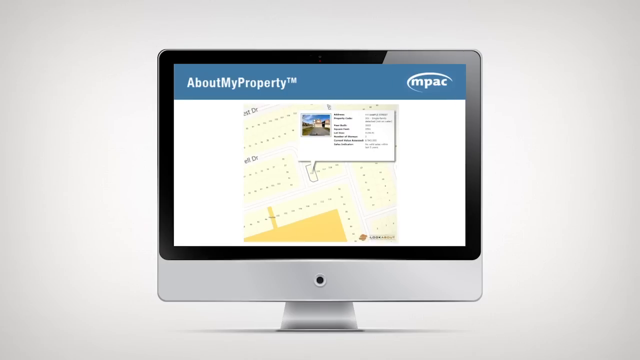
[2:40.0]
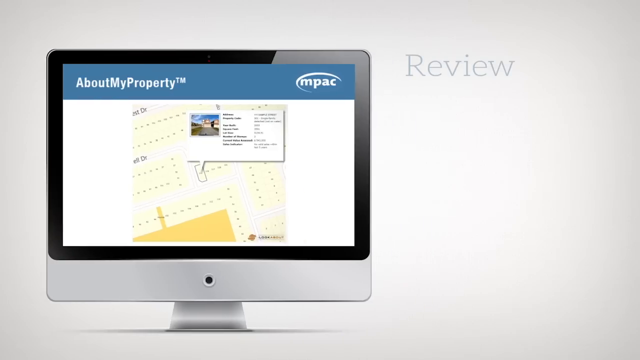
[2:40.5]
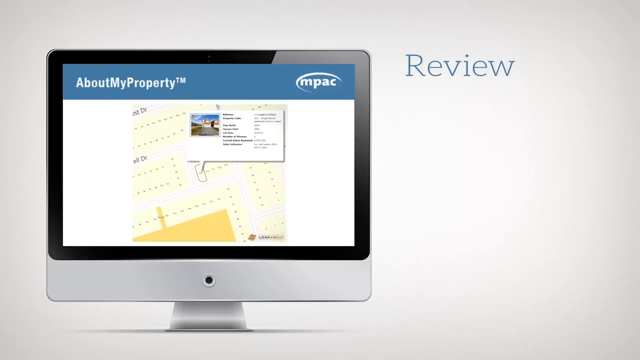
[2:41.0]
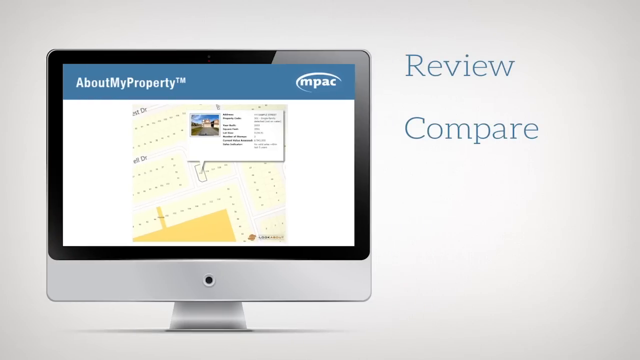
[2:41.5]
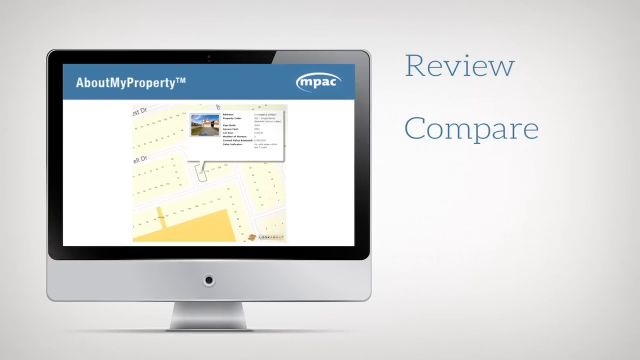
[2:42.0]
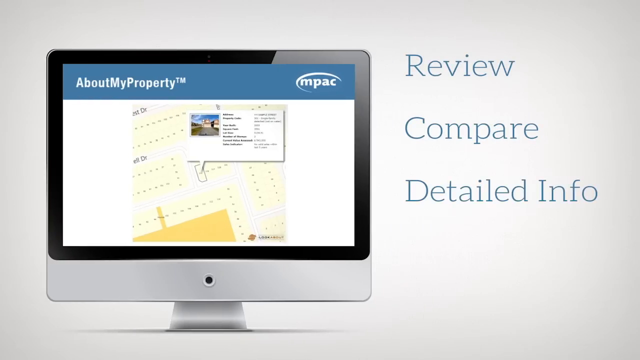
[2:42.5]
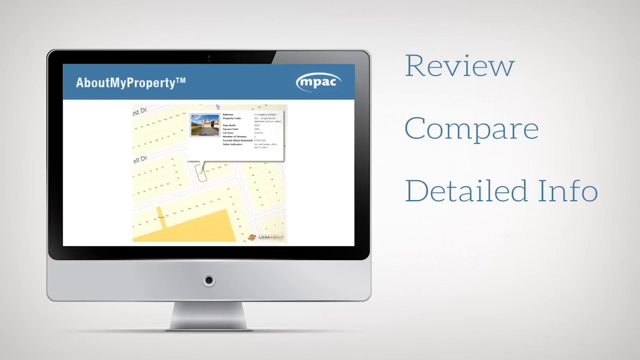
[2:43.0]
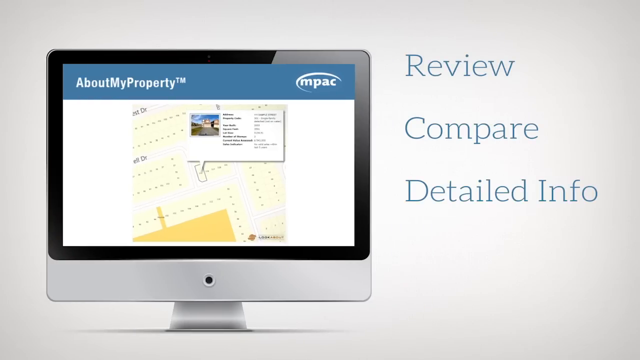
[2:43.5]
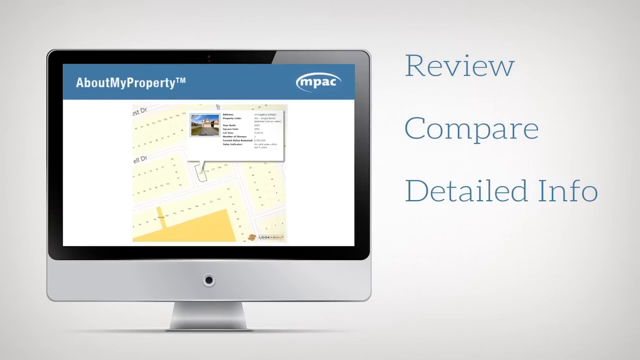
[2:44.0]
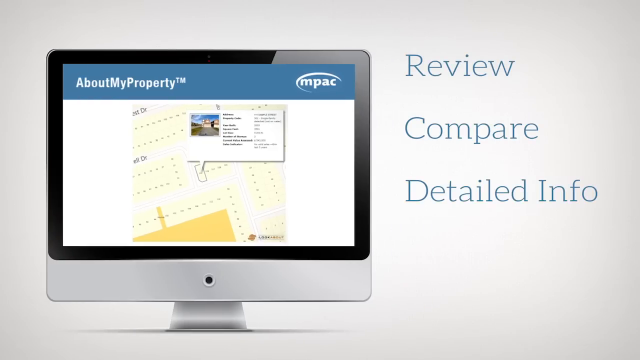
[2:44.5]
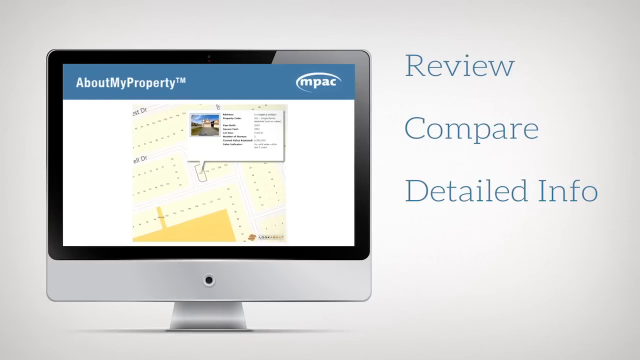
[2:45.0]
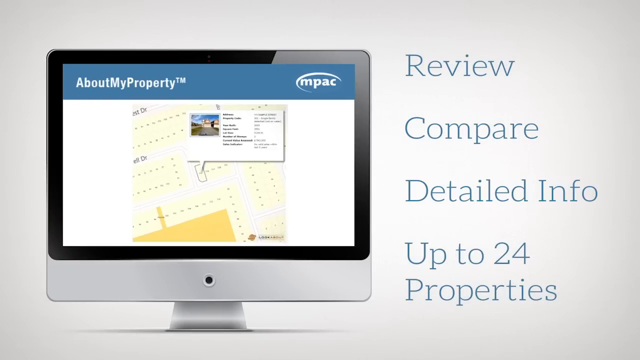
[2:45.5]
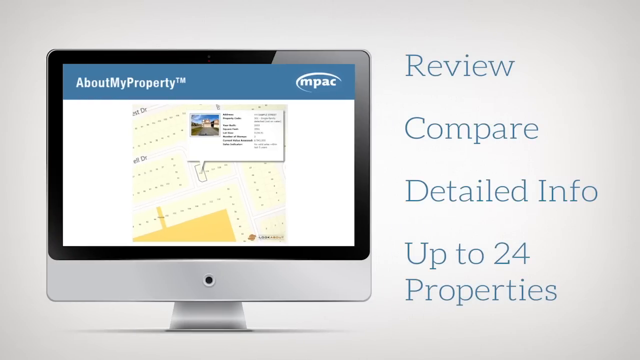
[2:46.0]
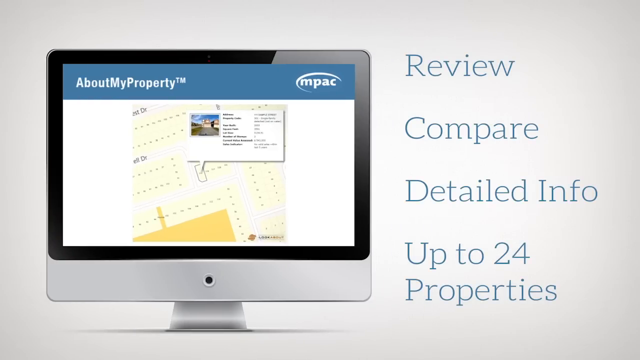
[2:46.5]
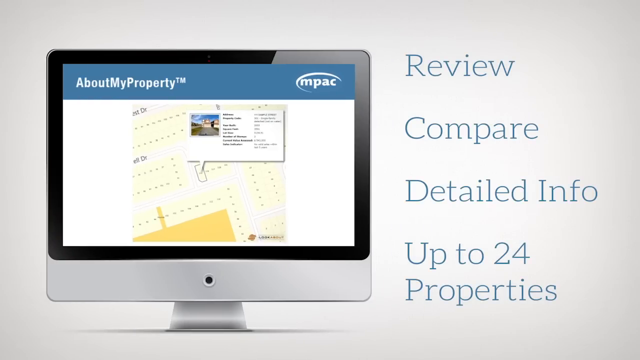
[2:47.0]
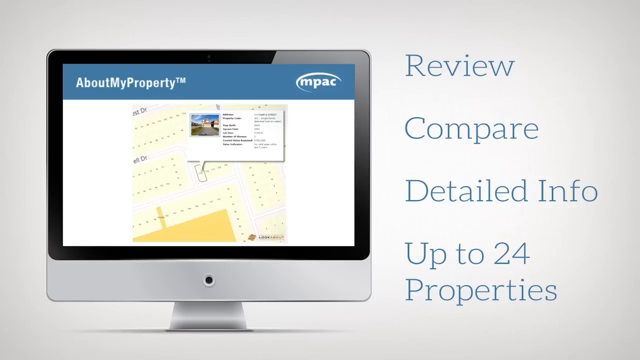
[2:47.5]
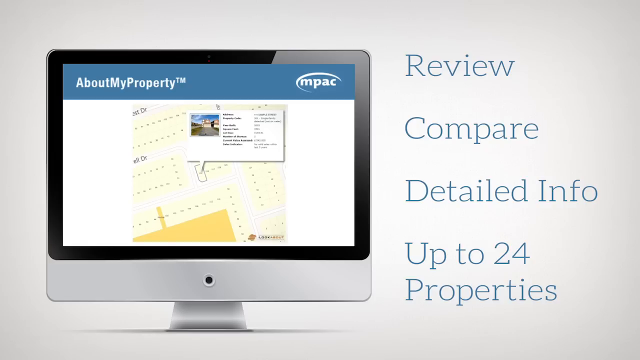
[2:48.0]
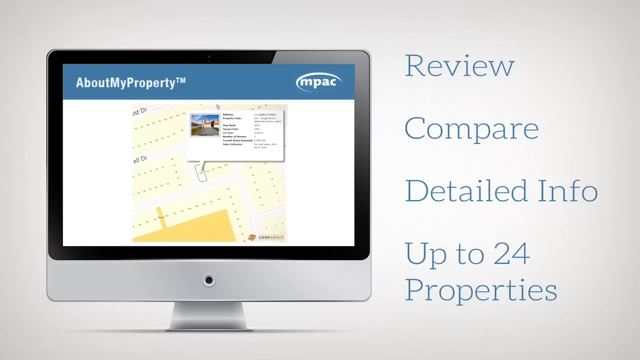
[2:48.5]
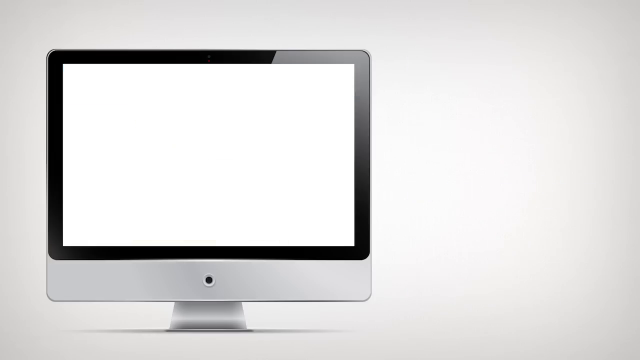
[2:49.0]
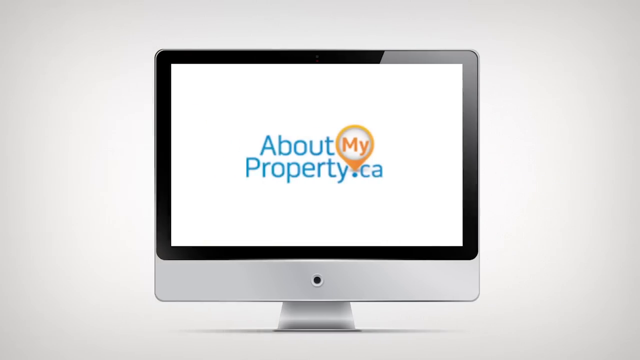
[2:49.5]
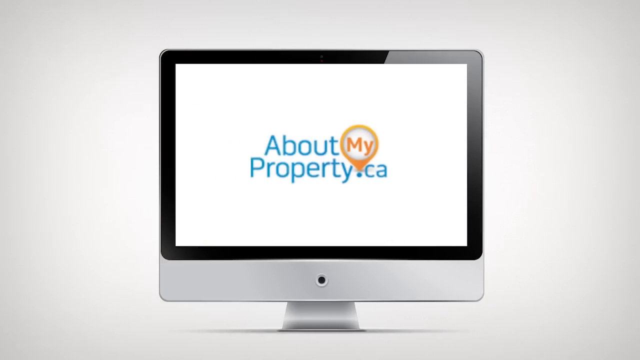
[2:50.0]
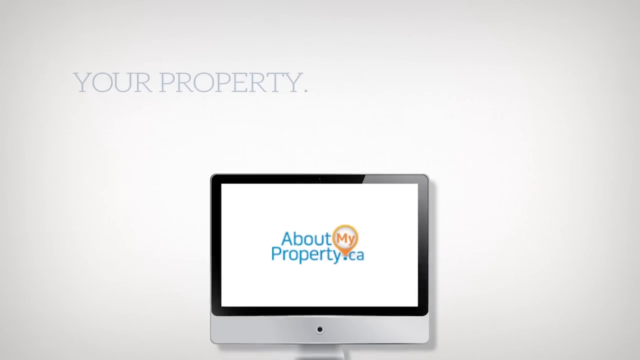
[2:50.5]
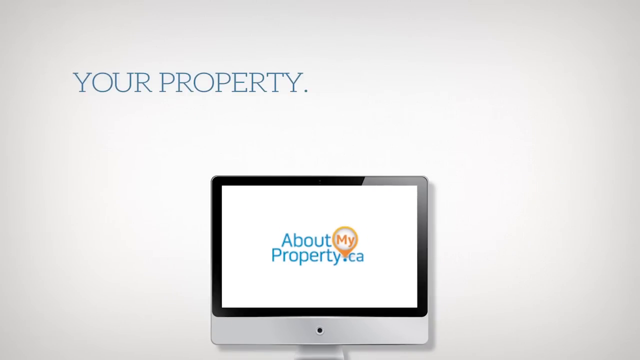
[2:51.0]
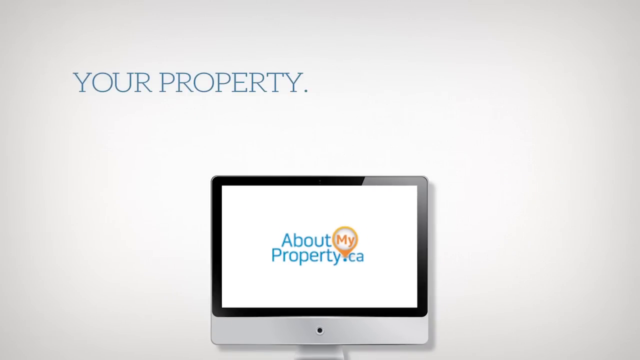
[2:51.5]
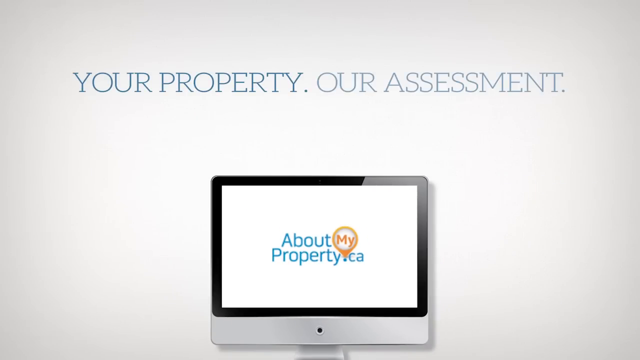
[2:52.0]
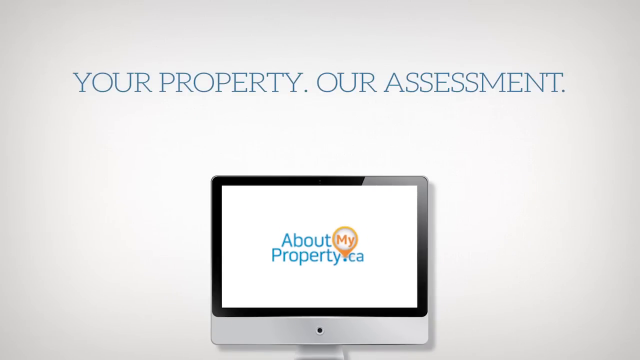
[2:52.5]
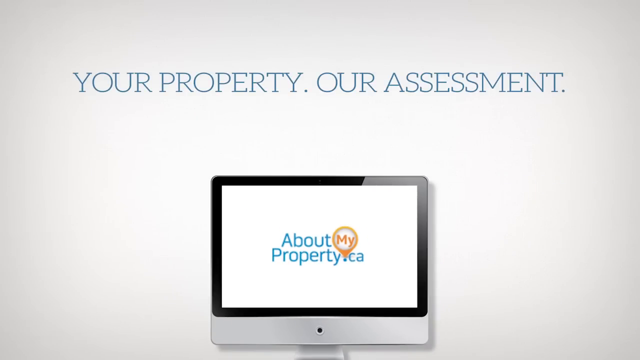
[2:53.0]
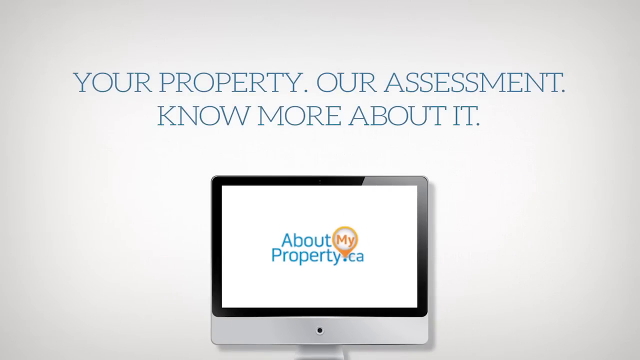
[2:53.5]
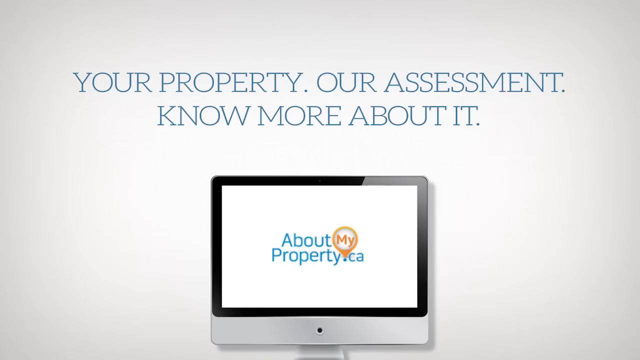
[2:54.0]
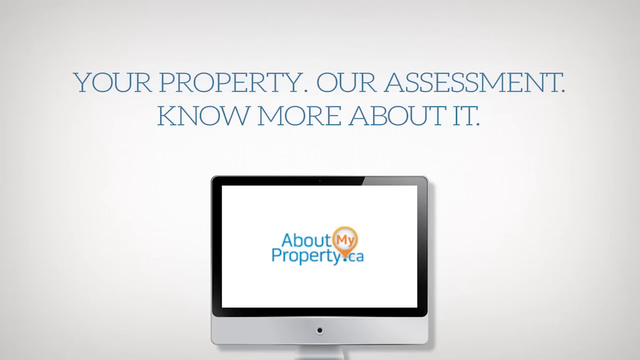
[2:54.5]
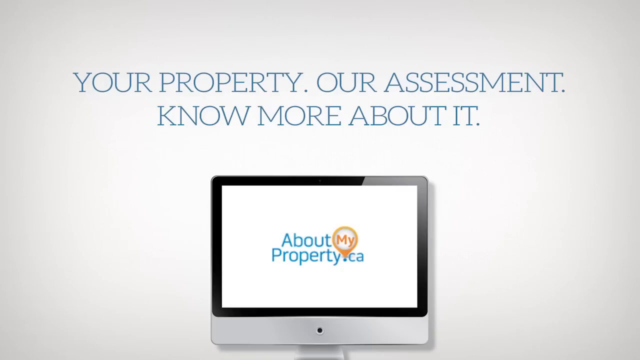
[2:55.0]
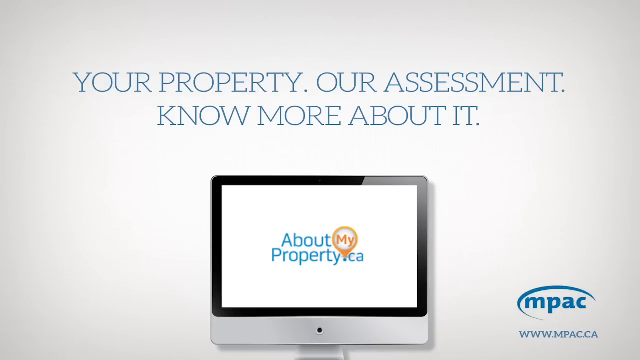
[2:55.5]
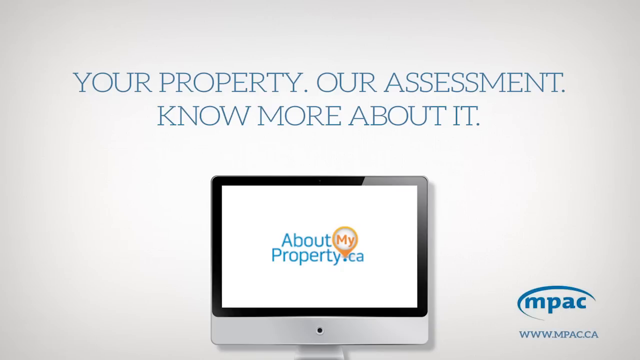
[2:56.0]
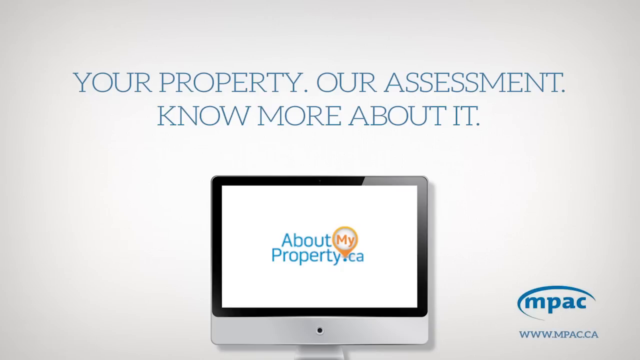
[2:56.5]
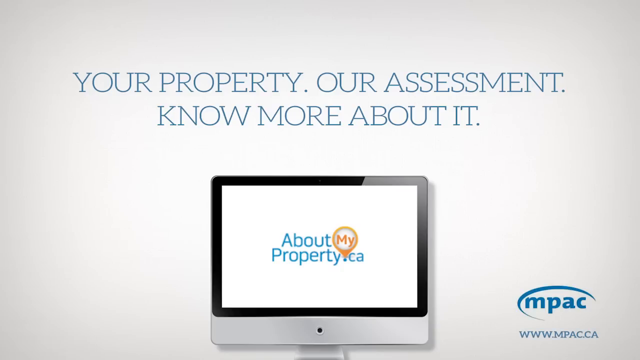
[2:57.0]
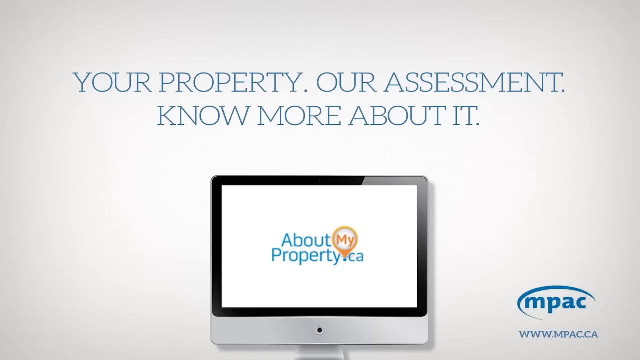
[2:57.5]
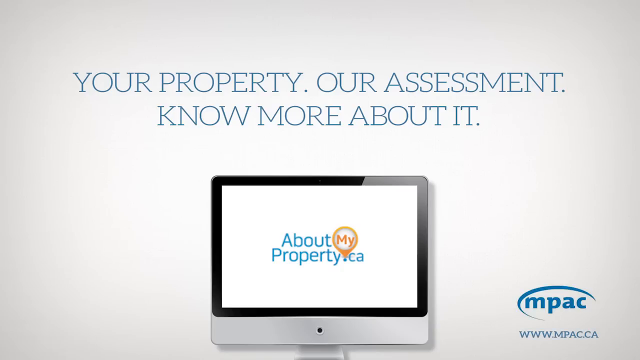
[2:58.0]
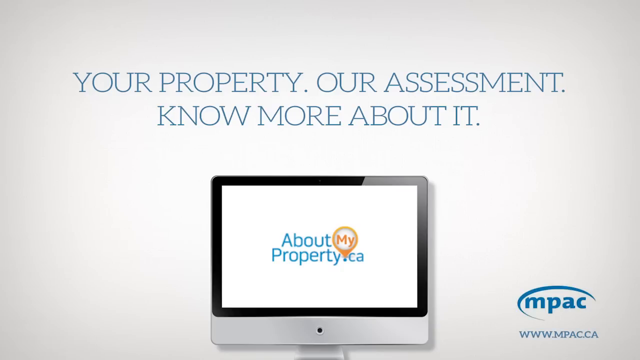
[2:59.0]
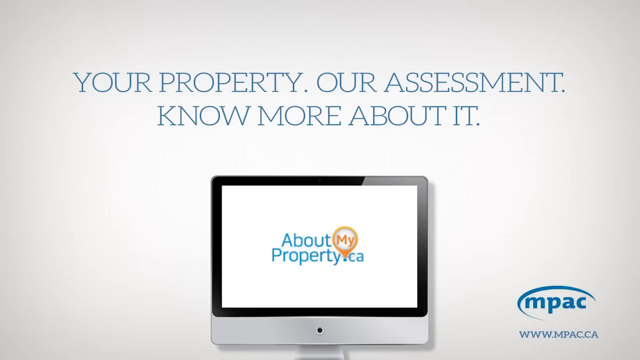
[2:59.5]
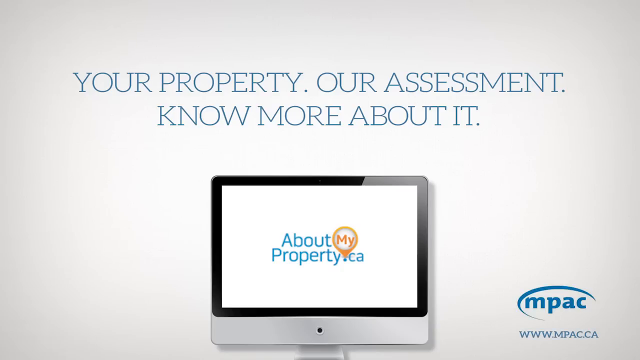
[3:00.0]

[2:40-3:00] The computer monitor is still on the screen, then slides to the left as blue text appears to the right reading "review, compare, detailed info, up to 24 properties". The monitor moves back to the center of the screen and shrinks down toward the bottom center, and blue text appears above it reading "your property, our assessment, know more about it".